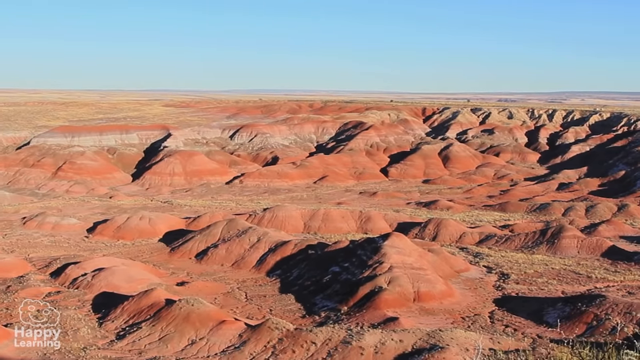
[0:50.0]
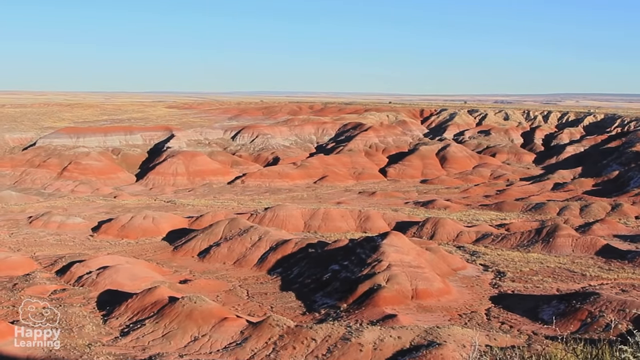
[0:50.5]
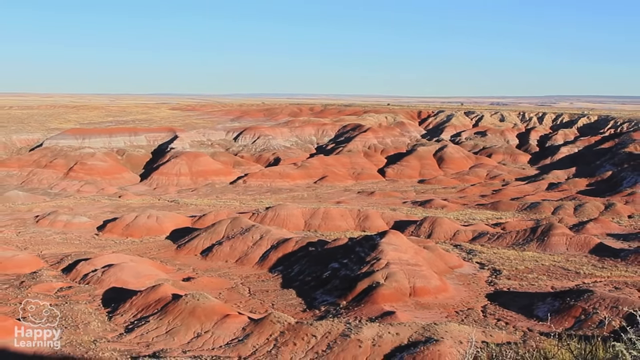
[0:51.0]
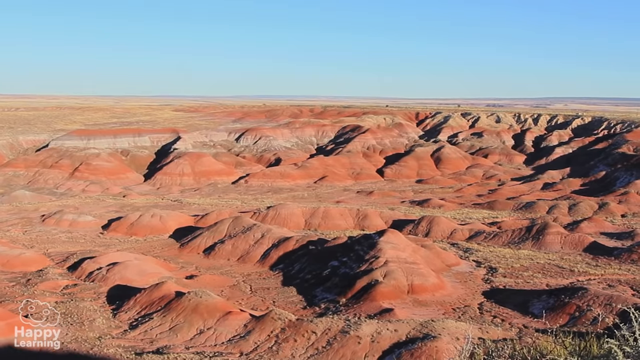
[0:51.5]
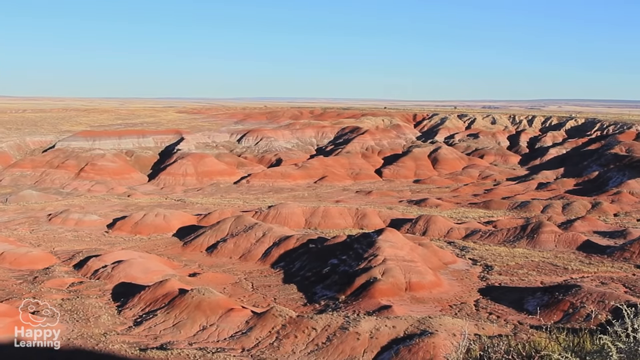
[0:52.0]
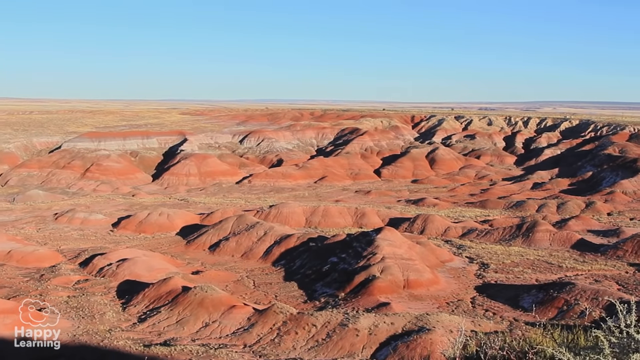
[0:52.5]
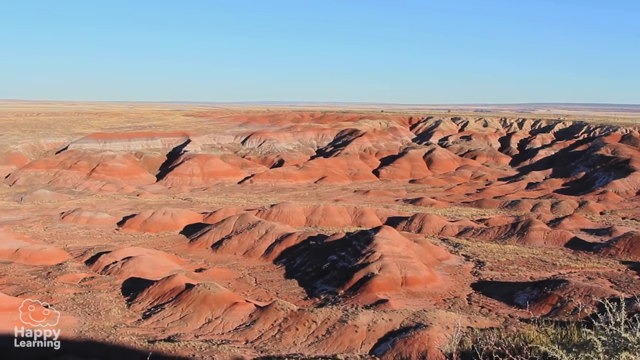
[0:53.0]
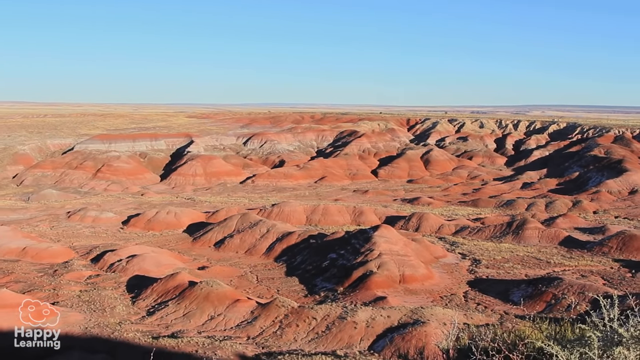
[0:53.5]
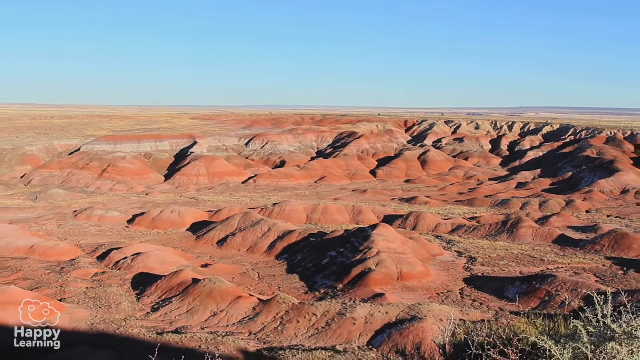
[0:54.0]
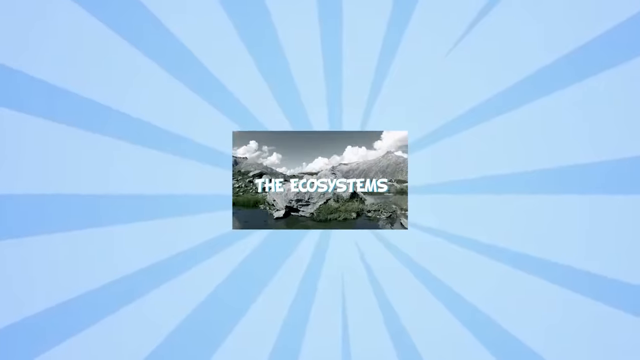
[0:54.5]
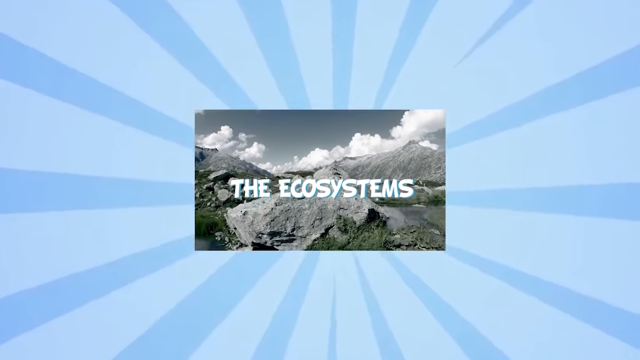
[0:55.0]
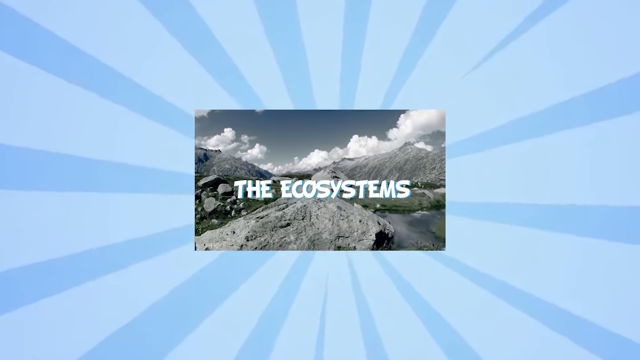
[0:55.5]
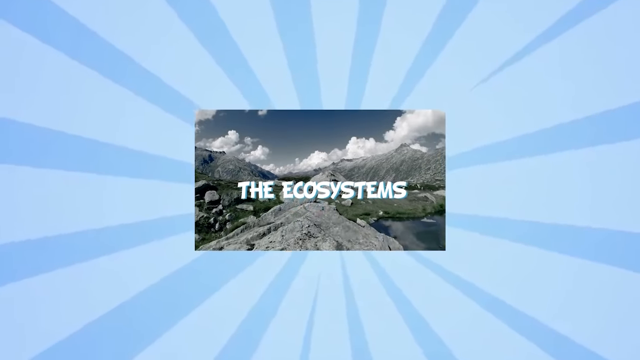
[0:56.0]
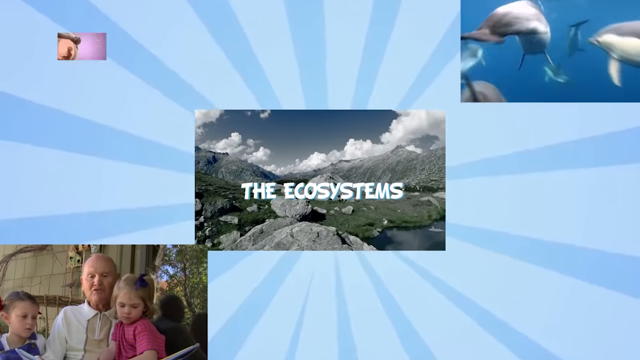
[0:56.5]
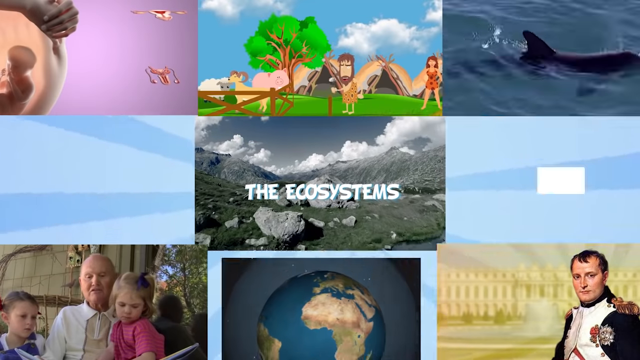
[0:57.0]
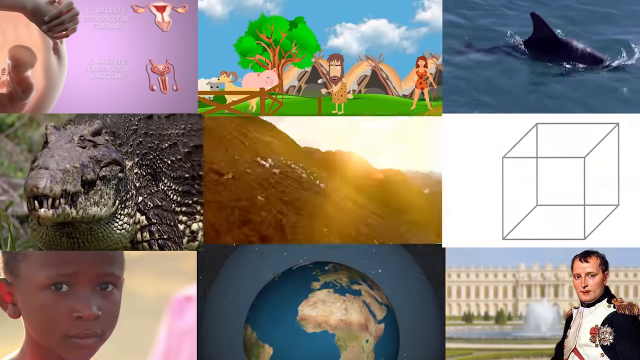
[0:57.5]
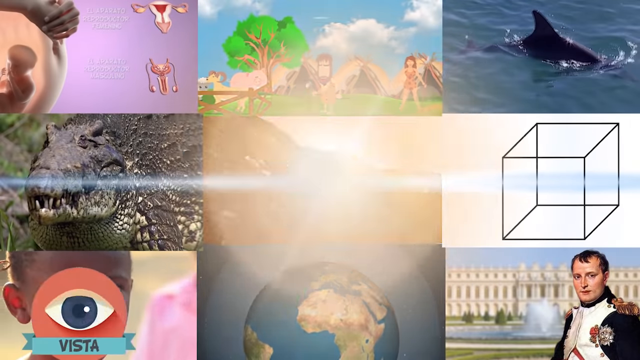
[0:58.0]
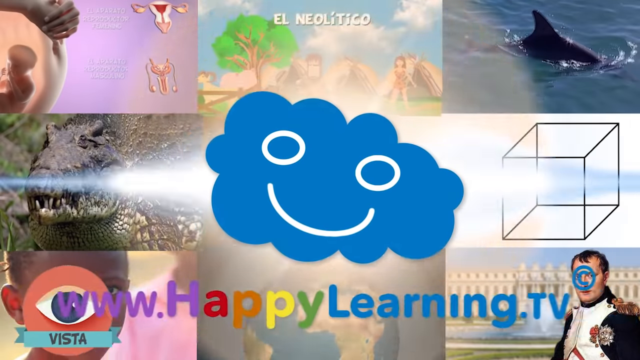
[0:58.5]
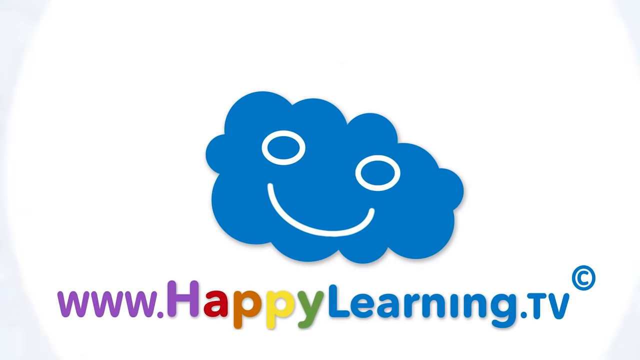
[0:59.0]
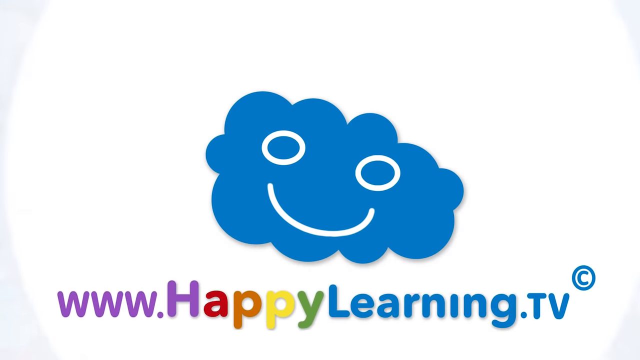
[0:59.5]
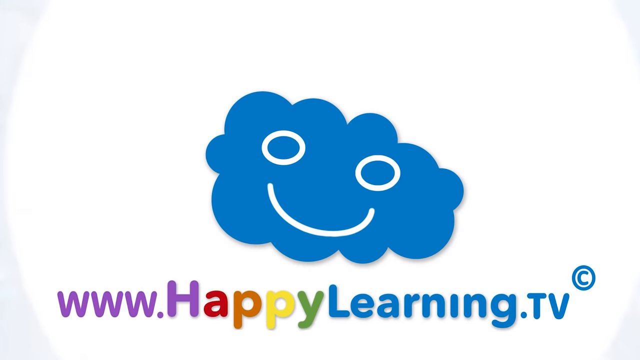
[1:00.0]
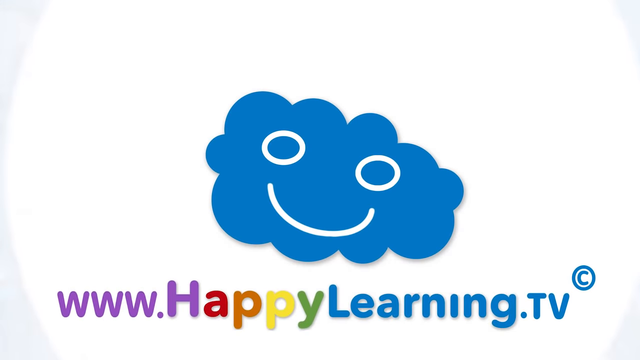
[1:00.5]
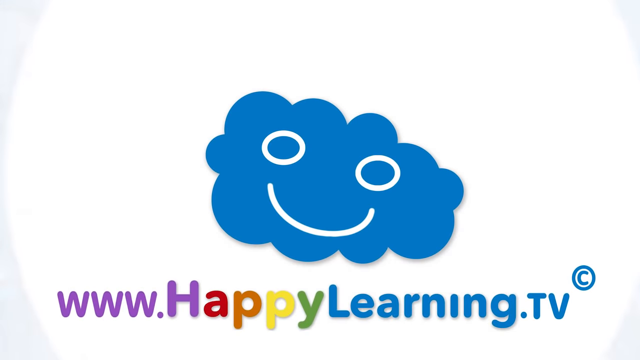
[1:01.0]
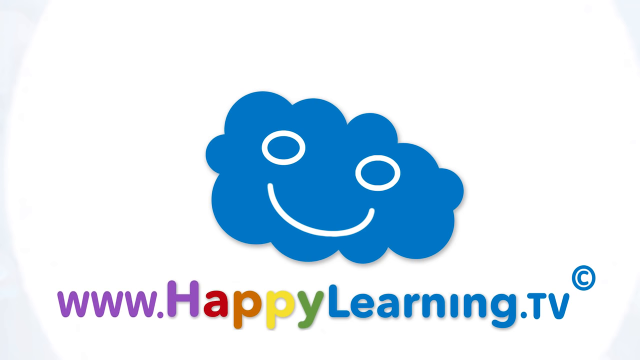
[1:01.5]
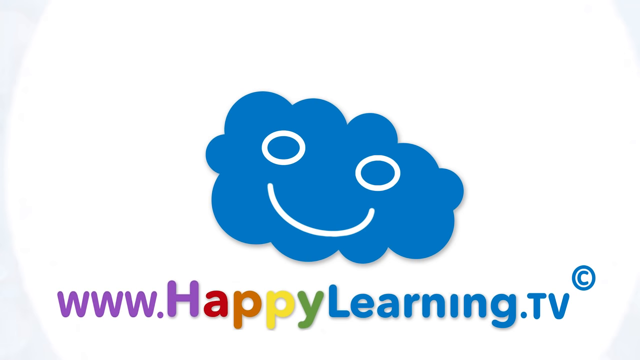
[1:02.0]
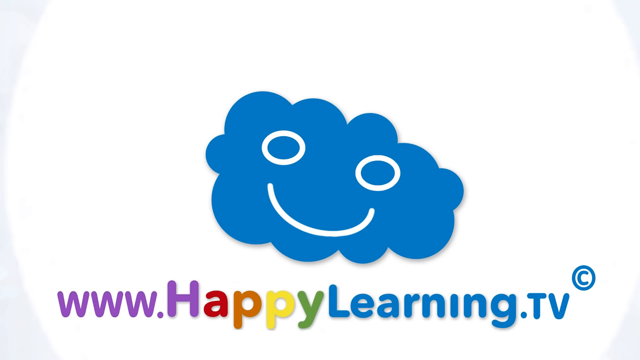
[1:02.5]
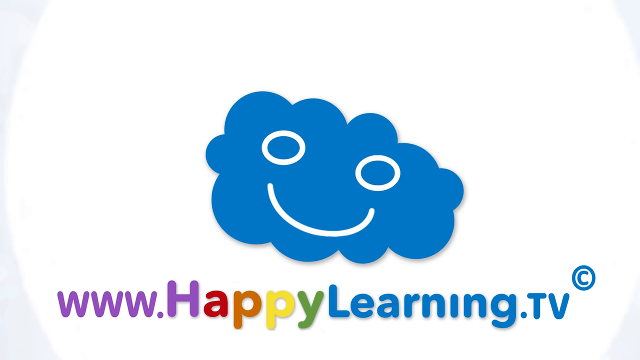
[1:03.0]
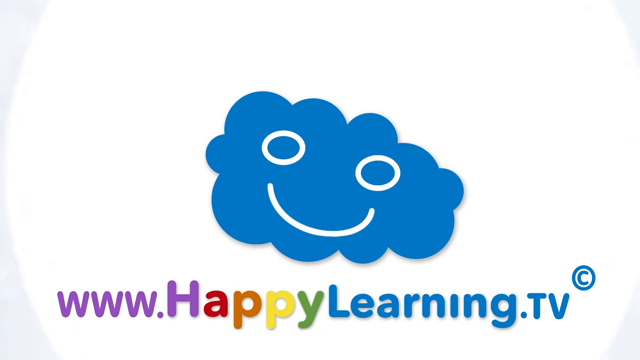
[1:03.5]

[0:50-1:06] Very rounded rolling mountains, red with white bands, stretch across the screen as the camera draws back. The video then goes to a blue screen with sun rays; in the middle is a picture of rocks, water and hills with the words "The Ecosystems" printed across it. Many different pictures then appear on the screen, nine in total: three across the top, three across the middle and three across the bottom. A cloud with a smiley face pops up with the words "www.happylearning.tv" beneath it. The image stays on screen for a while, then there is a flash of images in the background before it returns to the cloud.